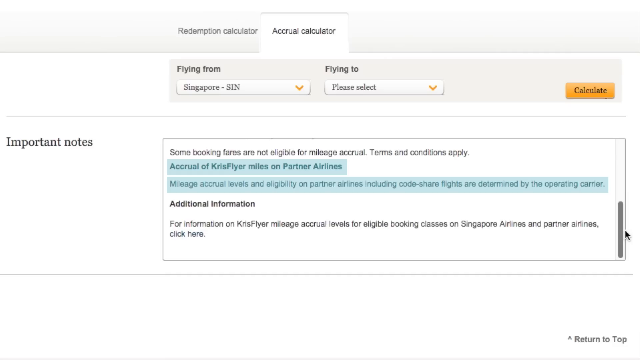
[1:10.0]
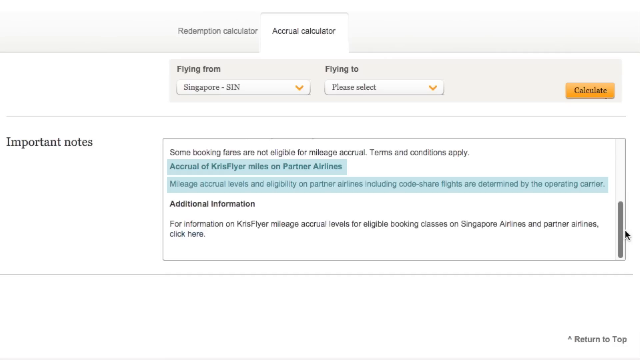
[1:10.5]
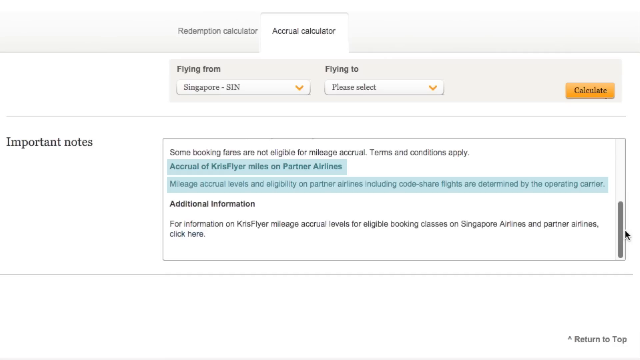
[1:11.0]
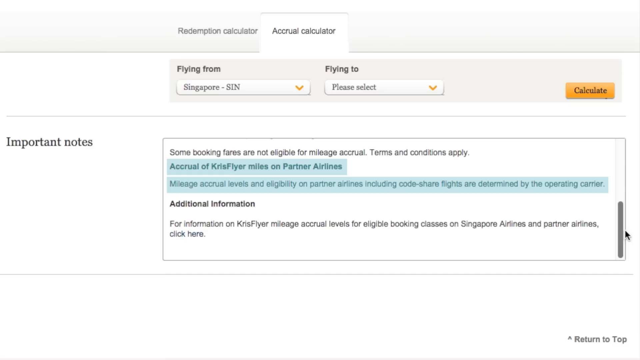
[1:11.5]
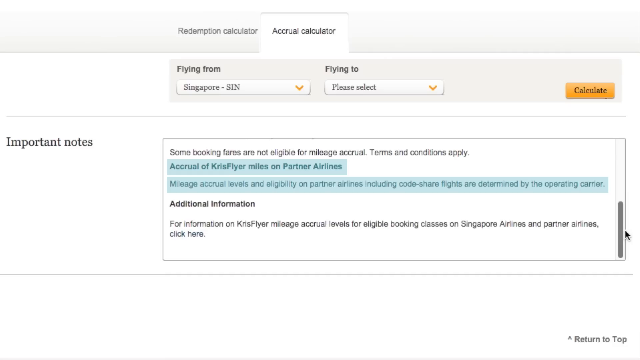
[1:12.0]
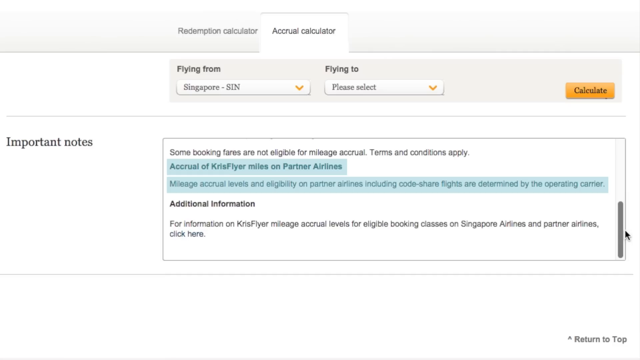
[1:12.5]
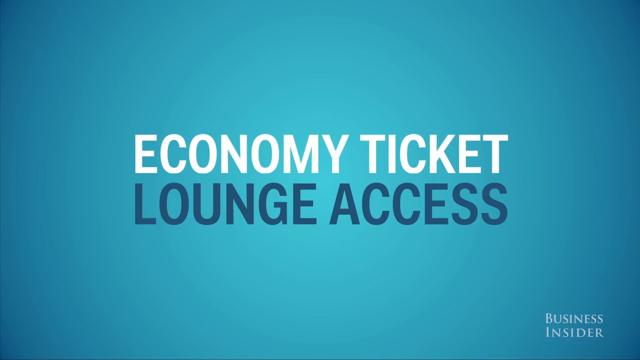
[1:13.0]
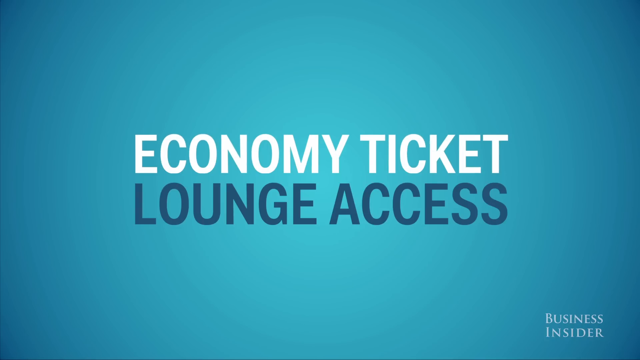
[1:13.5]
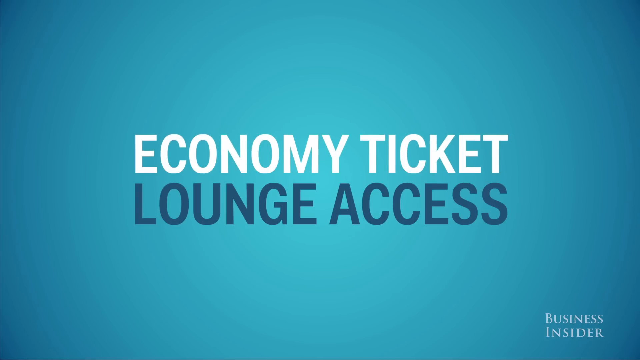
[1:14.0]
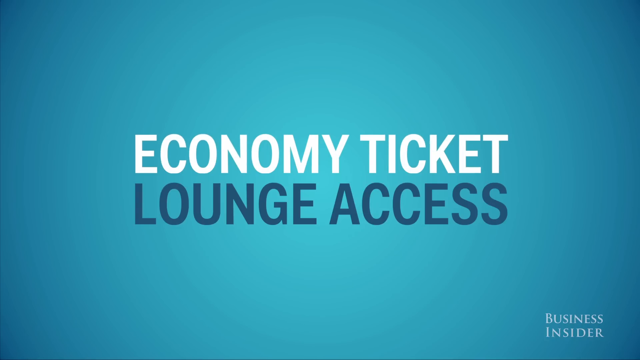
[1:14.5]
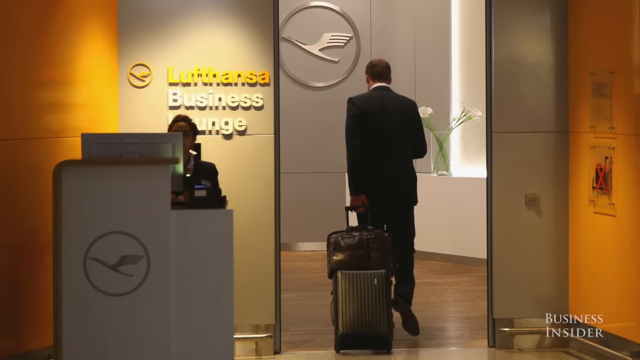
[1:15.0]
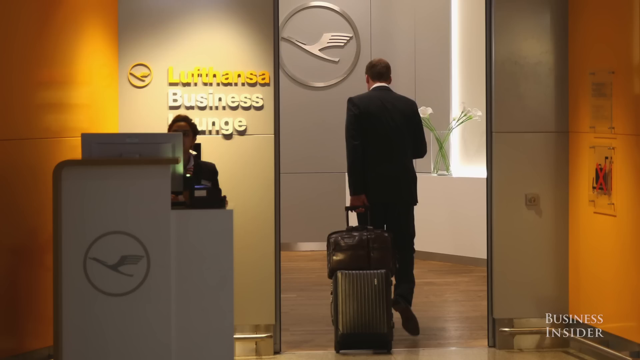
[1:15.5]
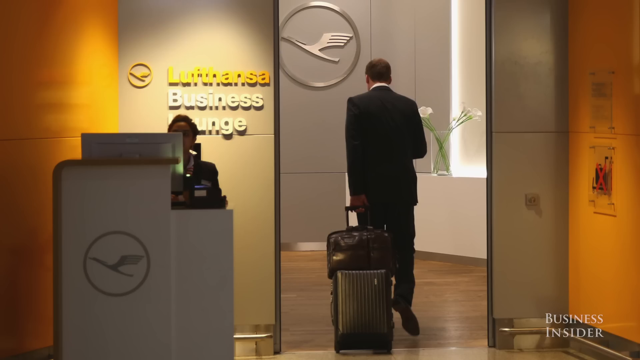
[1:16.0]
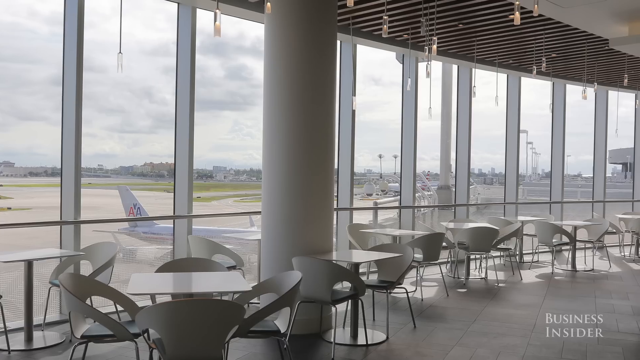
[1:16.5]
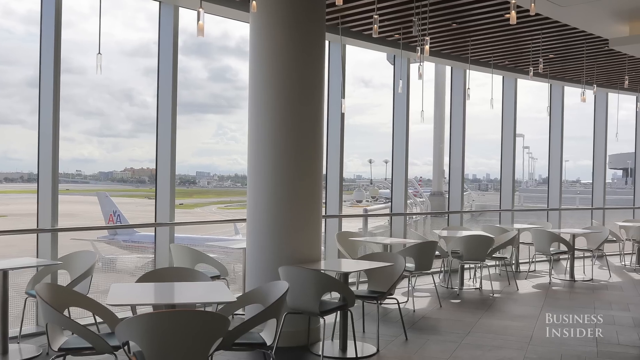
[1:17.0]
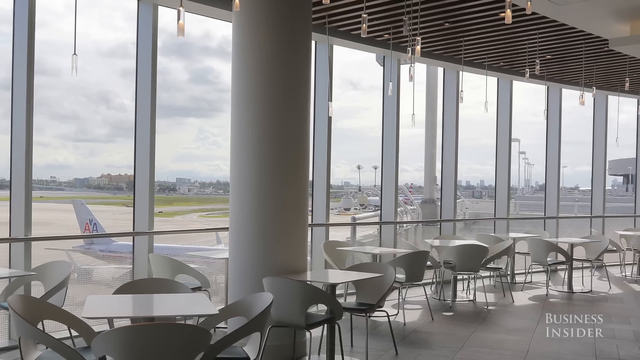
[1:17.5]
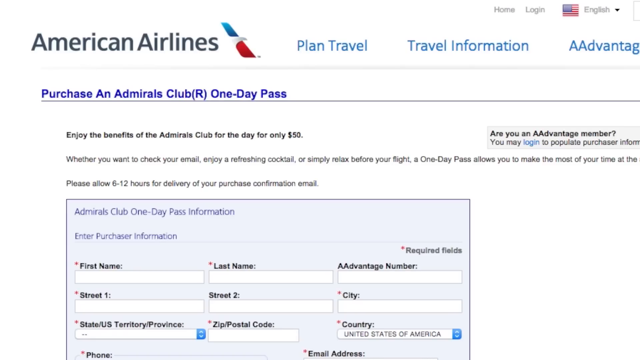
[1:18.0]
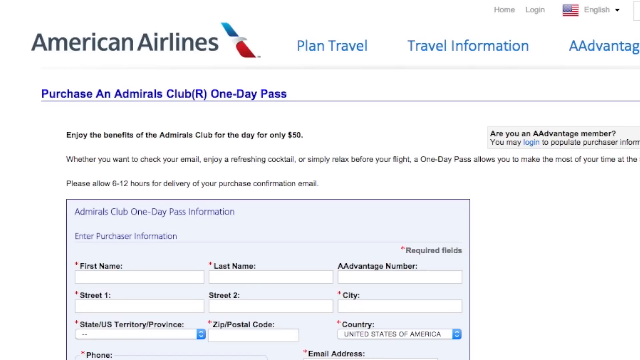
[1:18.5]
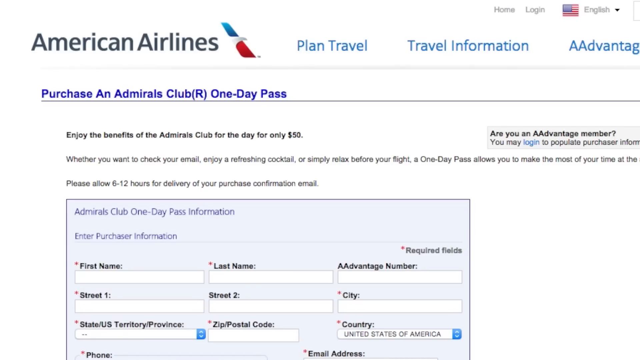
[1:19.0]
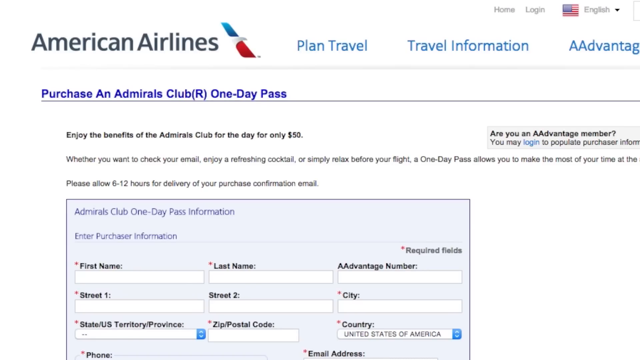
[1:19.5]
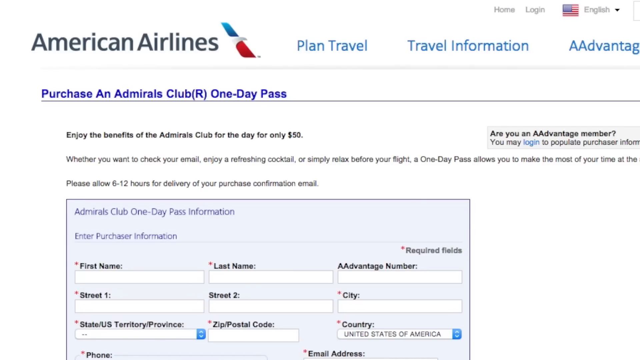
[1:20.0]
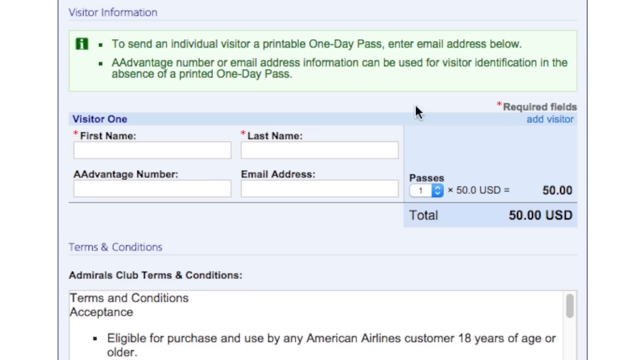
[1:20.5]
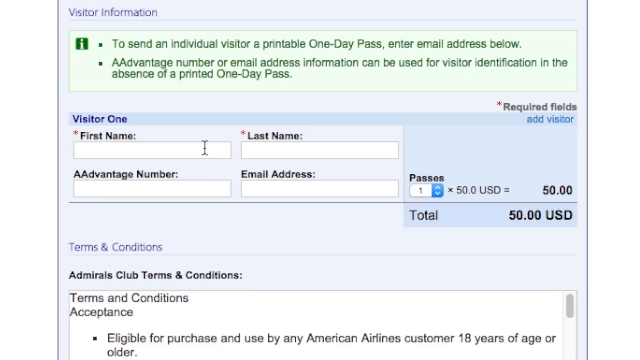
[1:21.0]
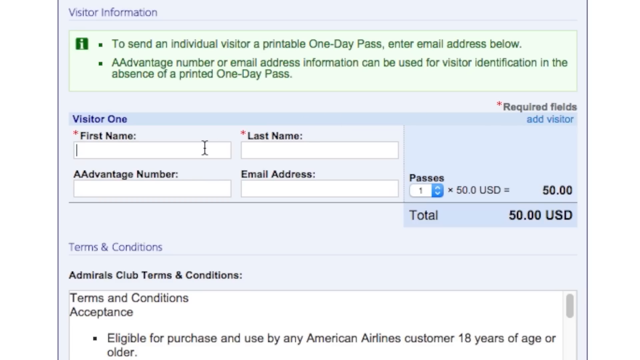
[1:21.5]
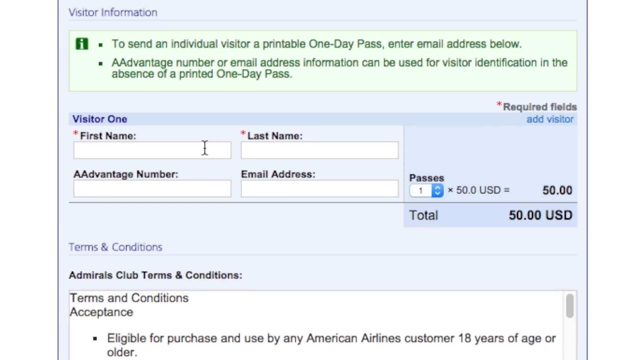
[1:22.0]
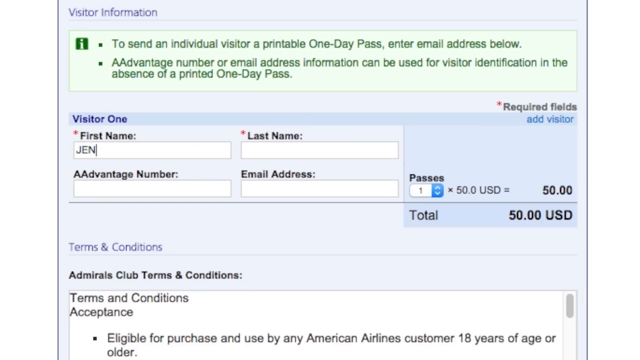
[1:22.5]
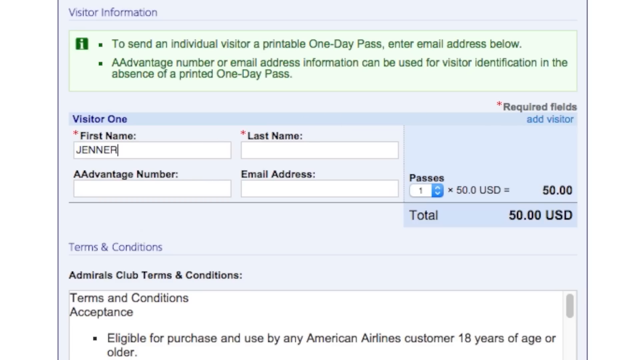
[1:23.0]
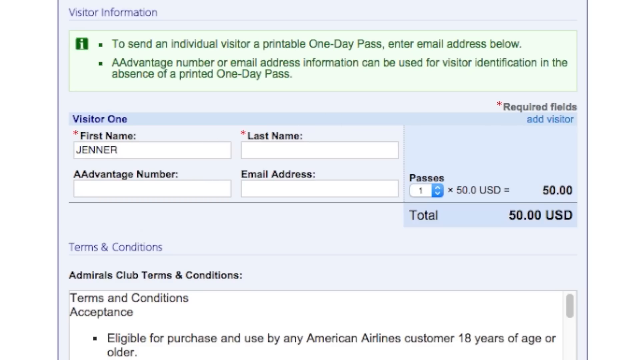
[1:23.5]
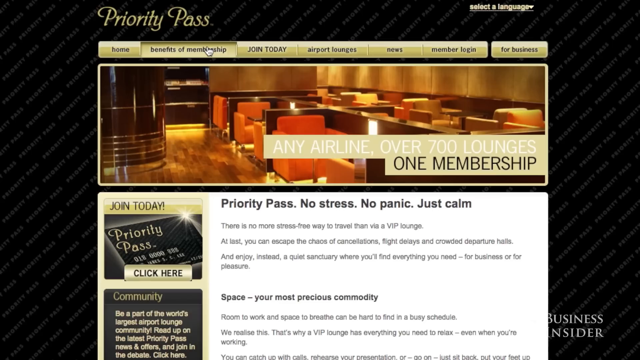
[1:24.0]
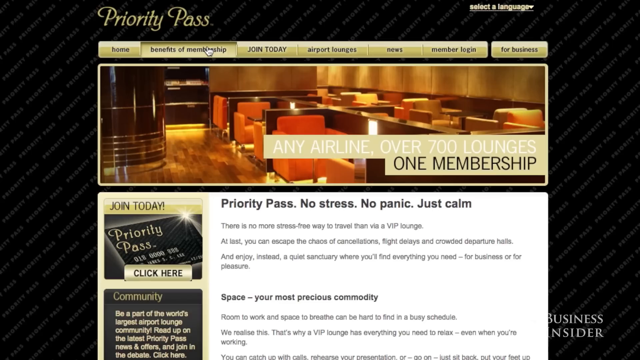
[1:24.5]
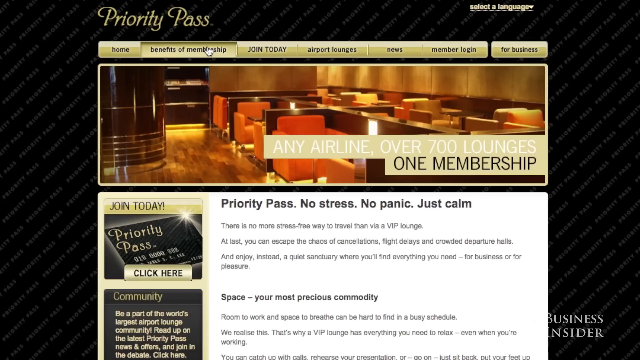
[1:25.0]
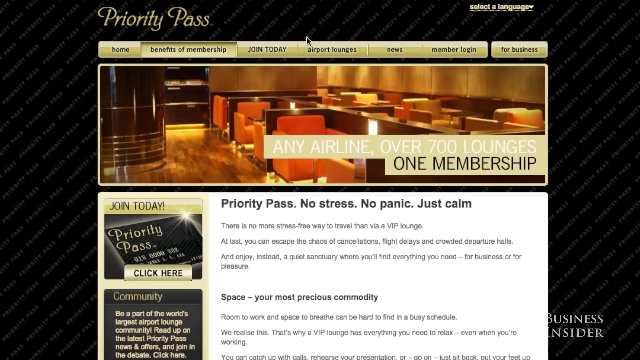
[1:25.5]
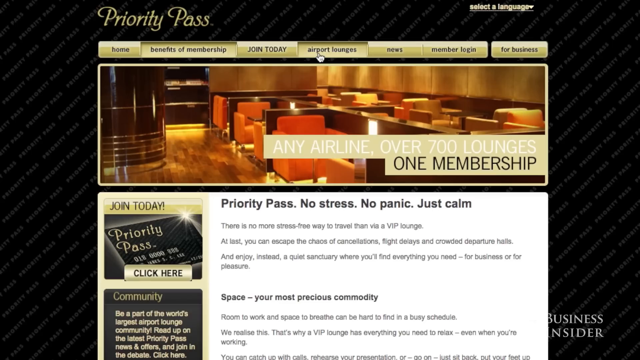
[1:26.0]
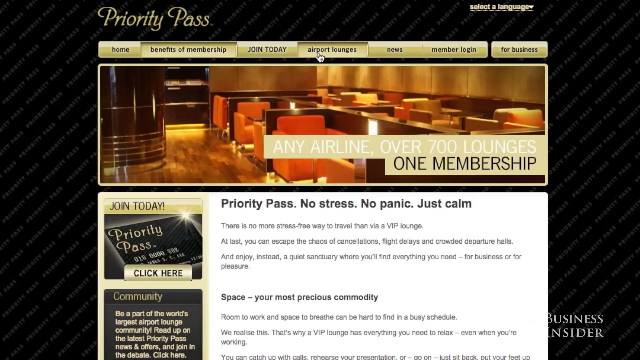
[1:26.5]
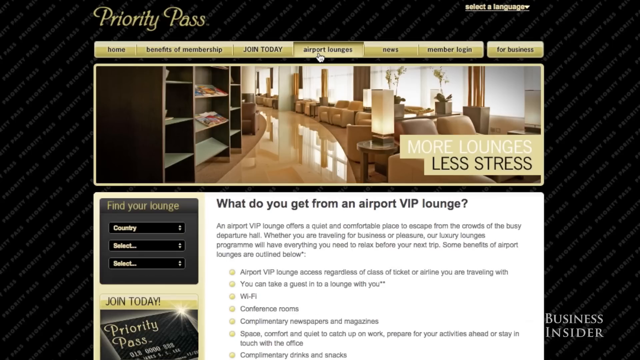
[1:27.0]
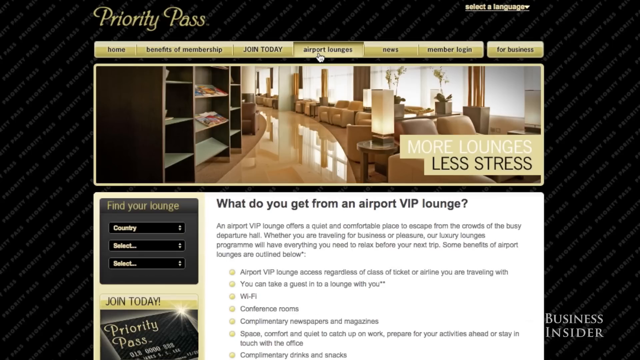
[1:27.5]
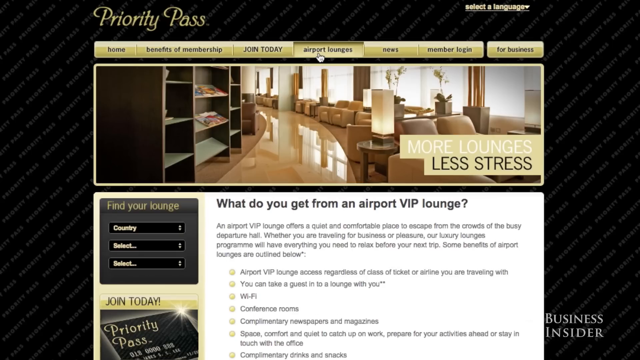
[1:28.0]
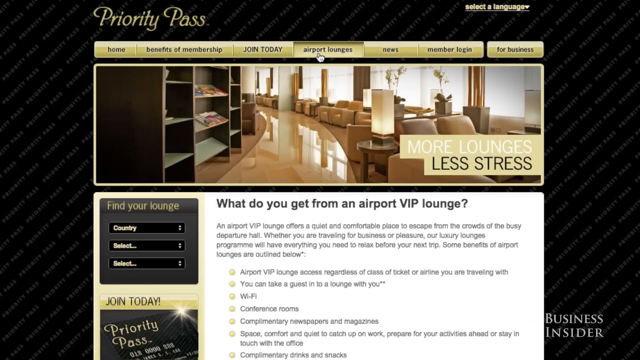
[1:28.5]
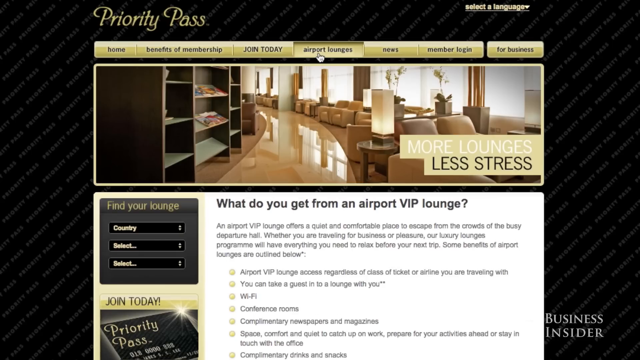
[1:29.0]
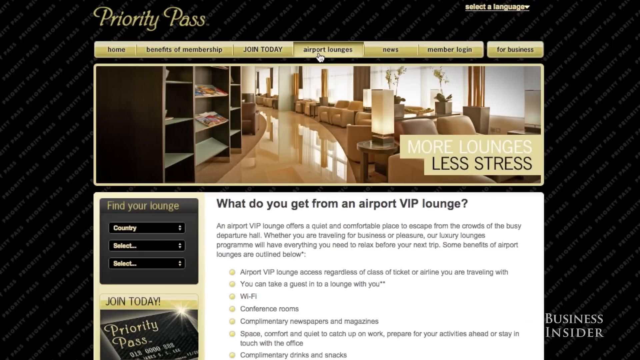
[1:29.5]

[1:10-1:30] An account page shows "economy tickets" and "lounge access," and a calculation of "economy ticket" and "lounge access." A man in a black suit looks down and walks away from the camera, pulling his luggage. The account shows "first name Jenner" and "last name." A Priority Pass appears with a picture of lounges, along with a Lufthansa business lounge and a picture of the airport. Text reads "priority pass," "no stress, no panic, just calm," "total $50," "50 US dollars," "community," "join today," "find your lounge," "one membership," "are you an AA Advantage member," "benefits of membership" and "airport lounges." A woman sits outside the lounge on the phone, and a woman is on the phone at a kiosk. The mouse clicks on airport lounge and moves over a field. A lounge appears to have a marble floor and luxurious couches.